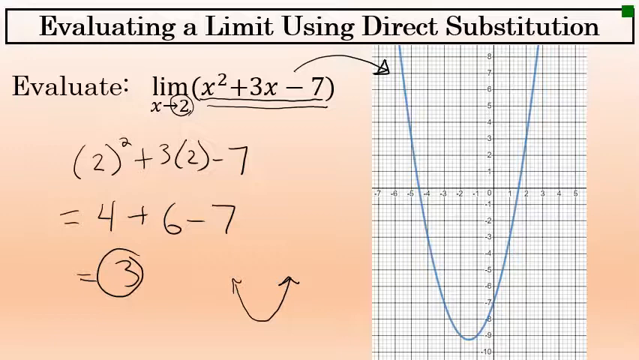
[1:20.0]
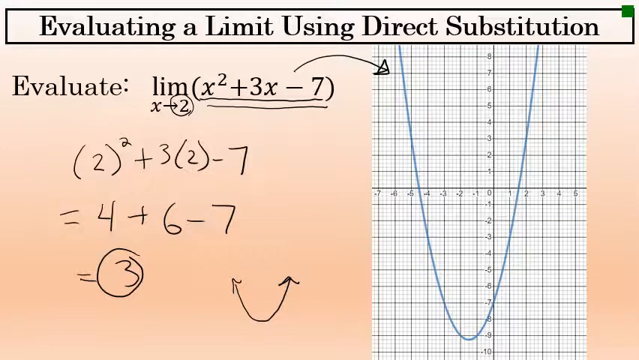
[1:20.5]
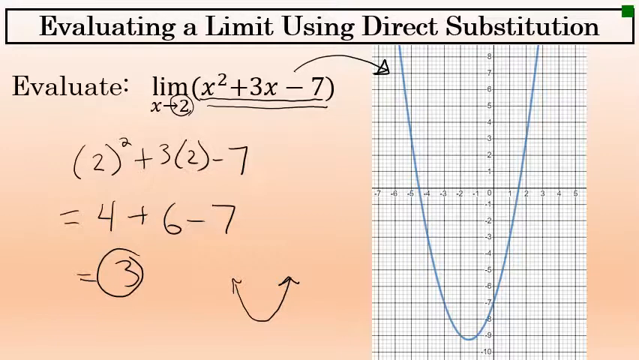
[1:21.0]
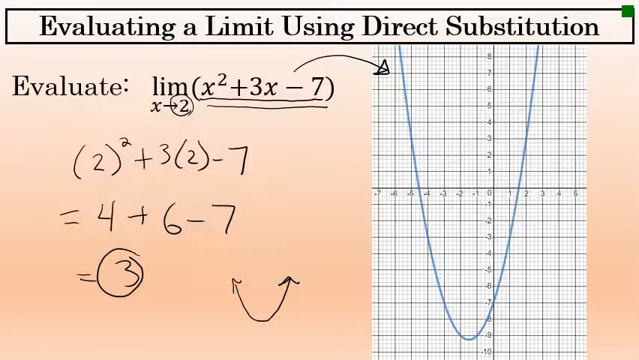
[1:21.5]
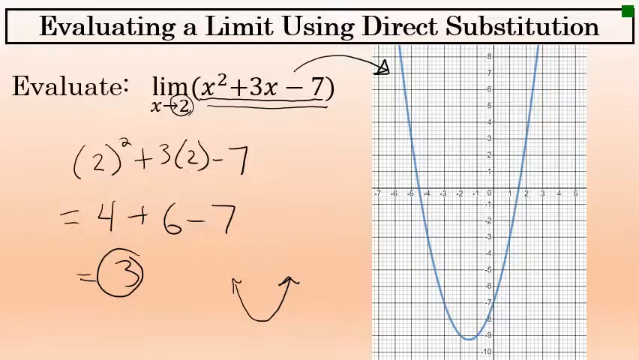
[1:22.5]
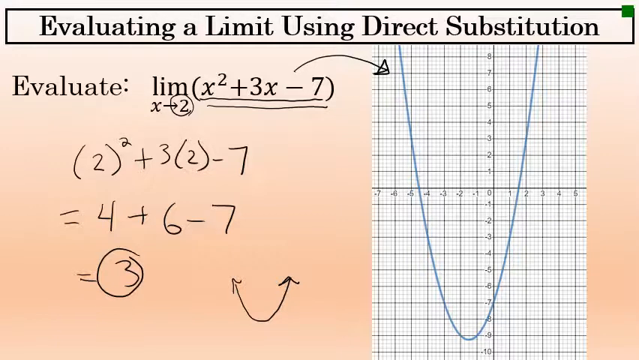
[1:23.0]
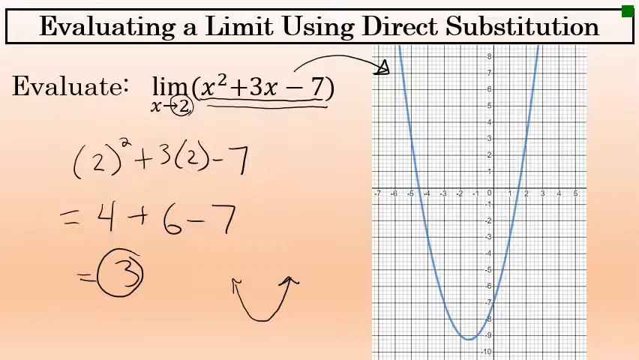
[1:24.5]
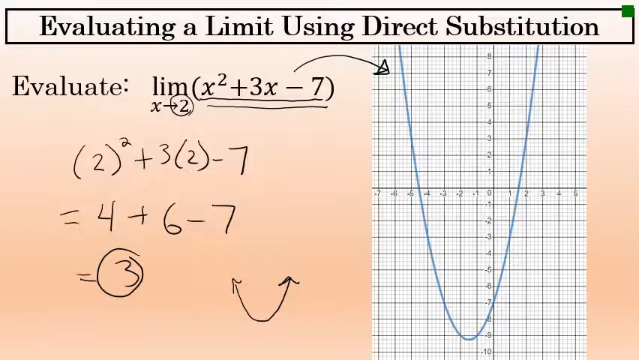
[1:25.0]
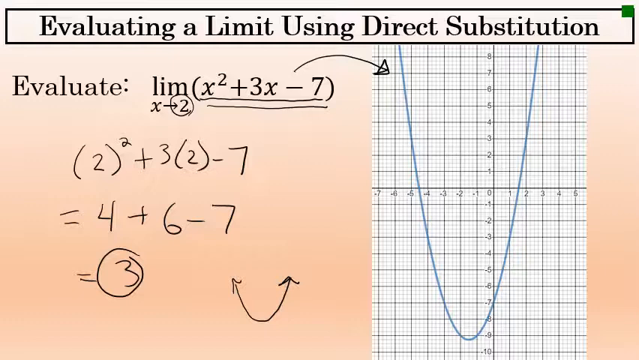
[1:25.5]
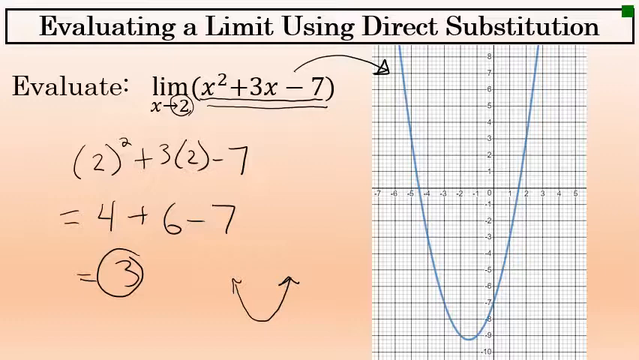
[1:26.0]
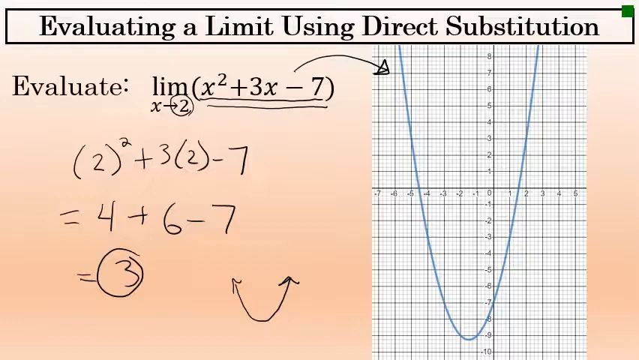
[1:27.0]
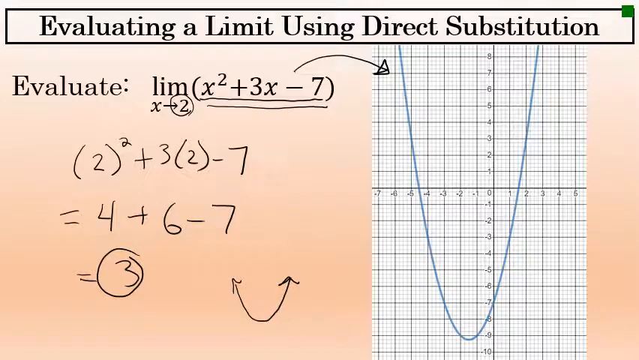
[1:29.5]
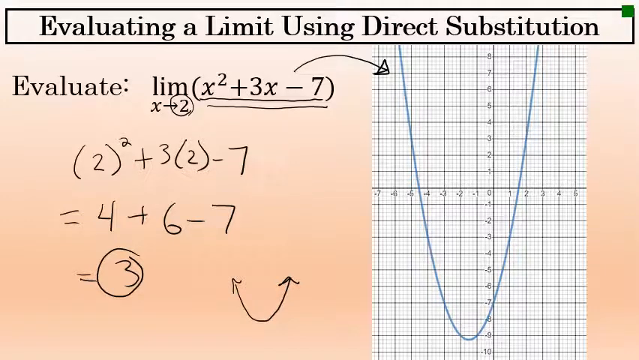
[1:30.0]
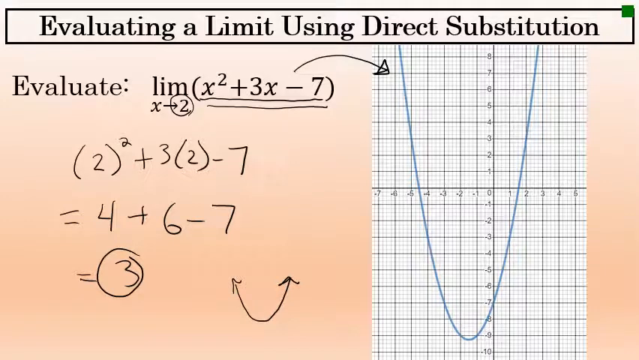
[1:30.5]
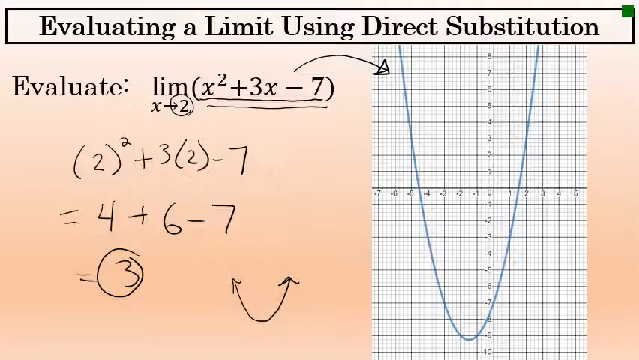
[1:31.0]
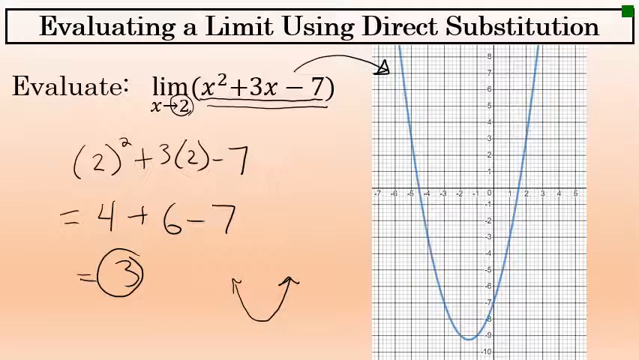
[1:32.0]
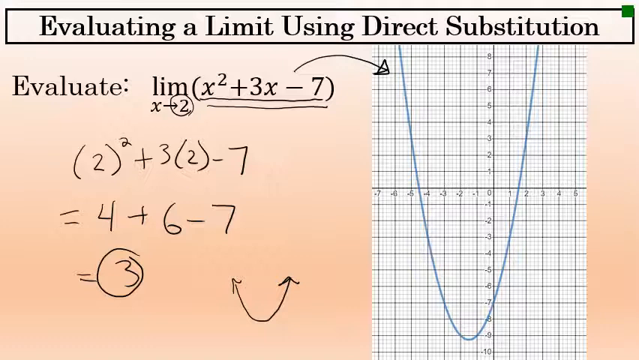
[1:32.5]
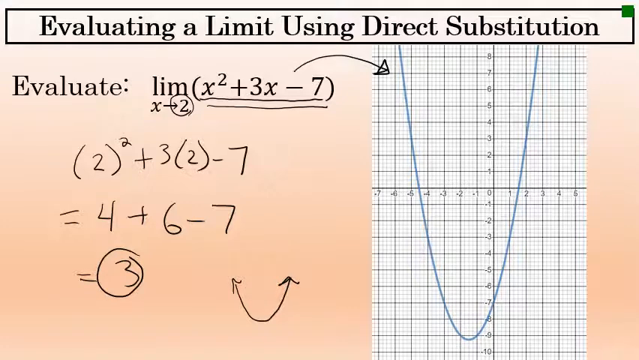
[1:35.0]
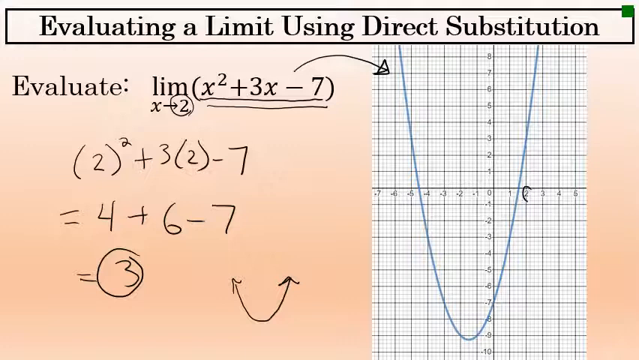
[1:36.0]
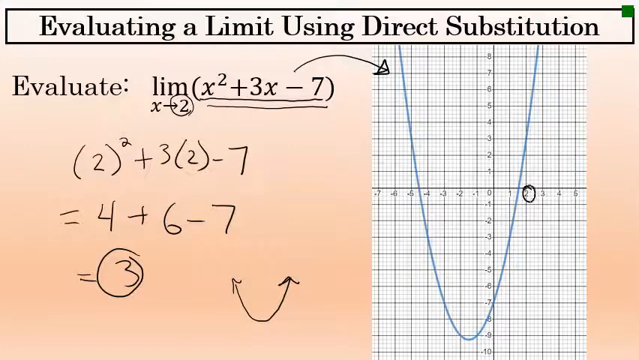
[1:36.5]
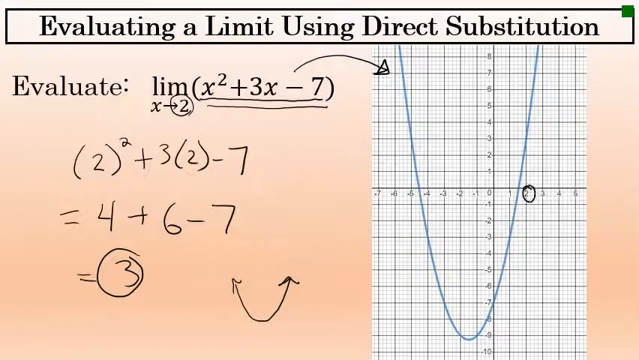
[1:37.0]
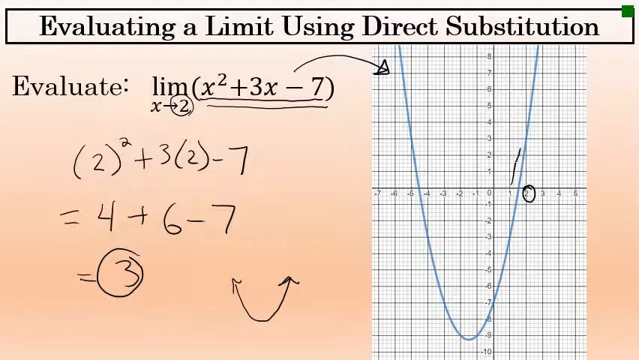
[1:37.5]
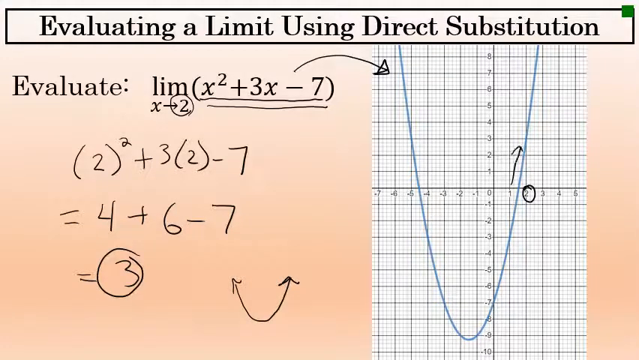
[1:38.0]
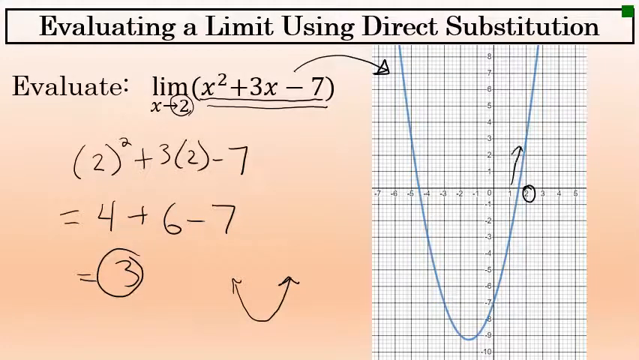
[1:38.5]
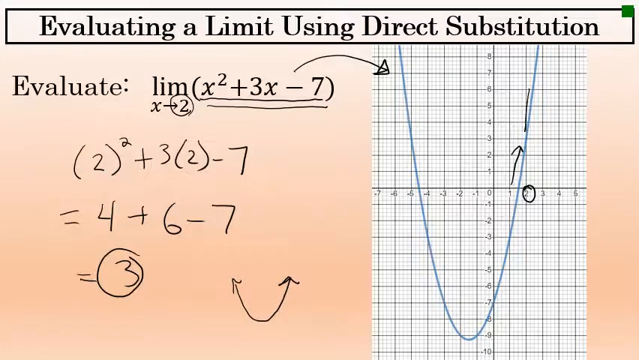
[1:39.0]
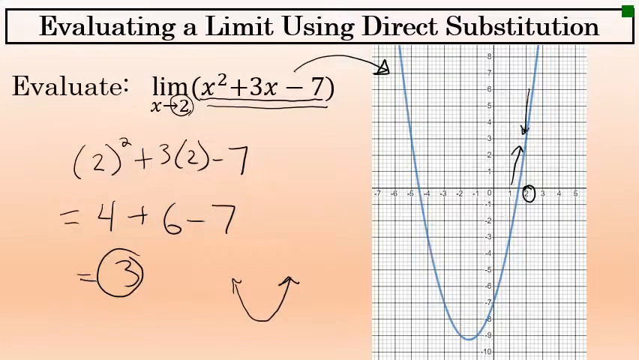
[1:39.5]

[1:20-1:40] The background is light pink or light orange. An equation, written in black, stretches from the top to the bottom on the left side. From the center to the right side there is a graph with smaller boxes and numbers, and a blue line that comes from the top down to the middle section and goes up to the top again, stretching to the right side. On the graph, two lines go downward from halfway, another line runs sideways from the middle, and each line has numbers on it. As the video progresses, arrows are drawn on the left side of the blue line, one facing up and the other facing down. At the top, "evaluating a limit using direct substitution" is written in red.